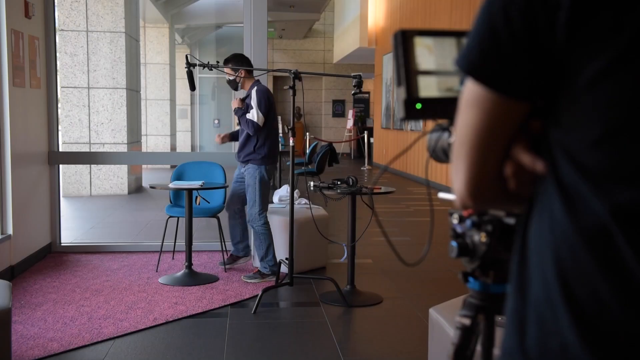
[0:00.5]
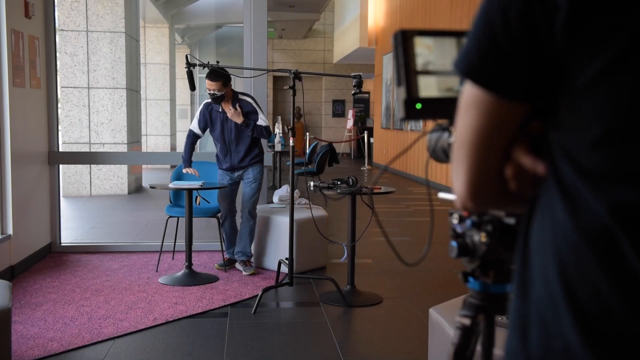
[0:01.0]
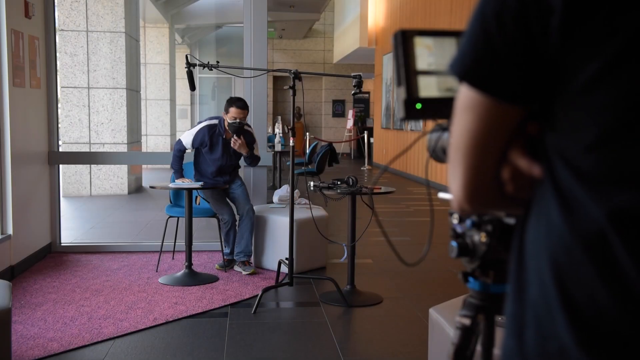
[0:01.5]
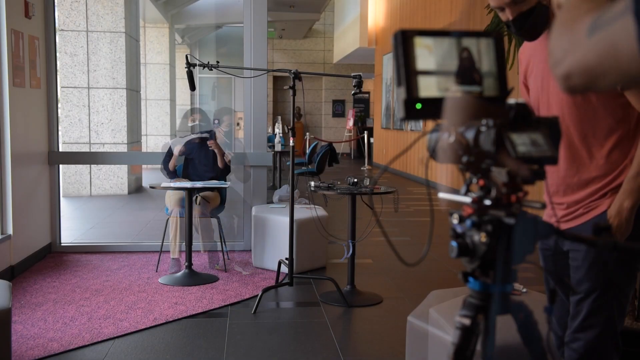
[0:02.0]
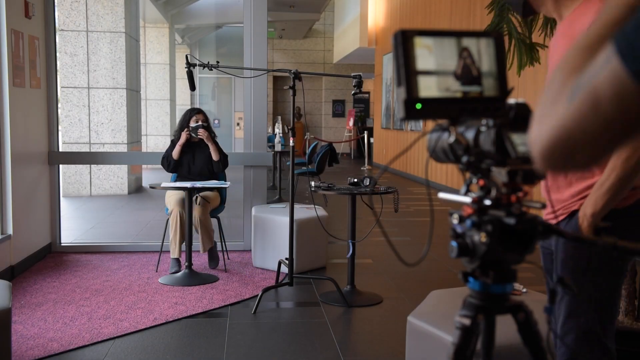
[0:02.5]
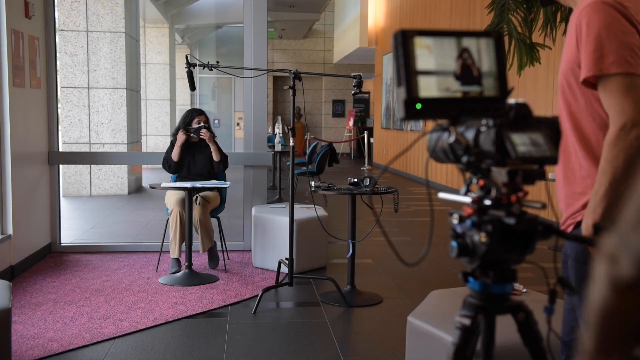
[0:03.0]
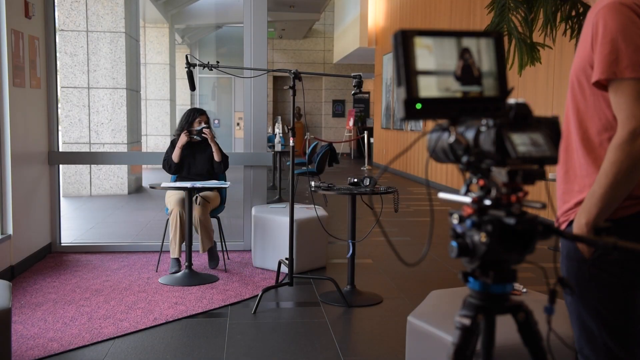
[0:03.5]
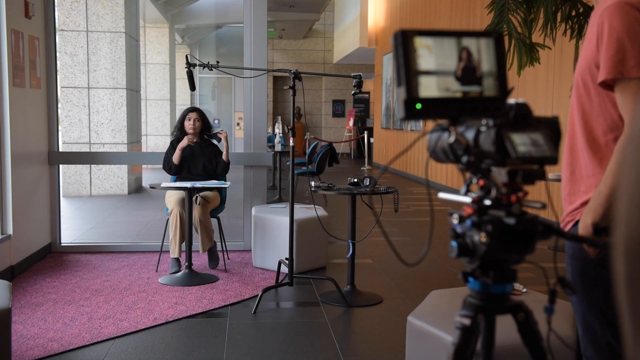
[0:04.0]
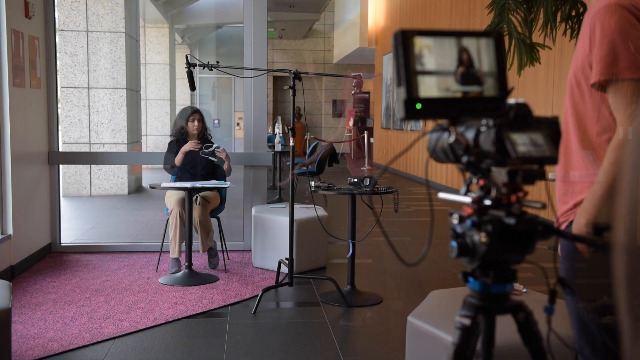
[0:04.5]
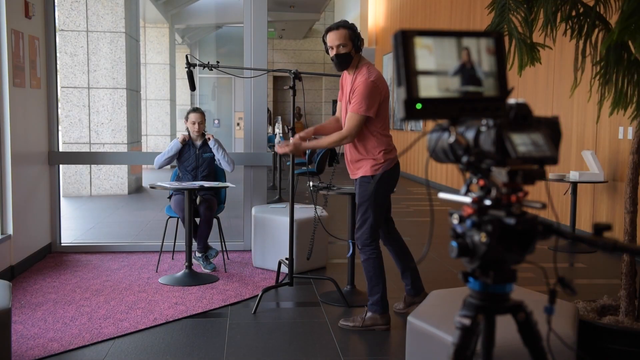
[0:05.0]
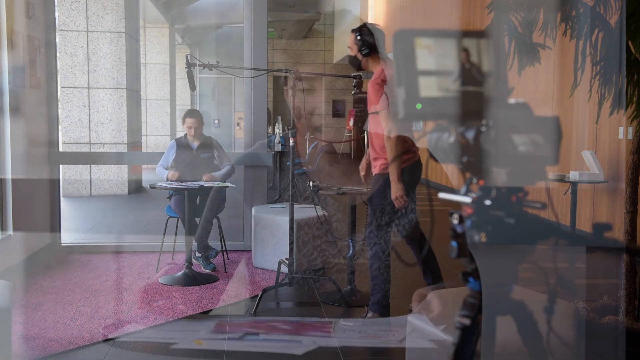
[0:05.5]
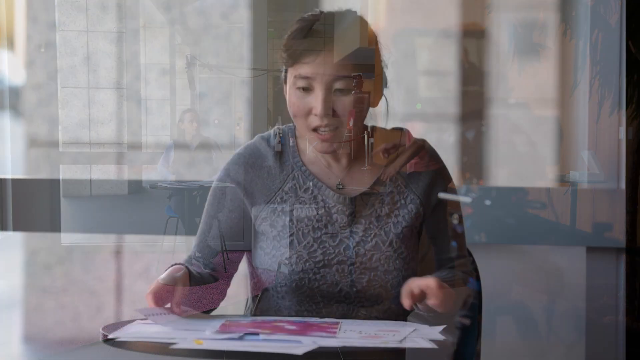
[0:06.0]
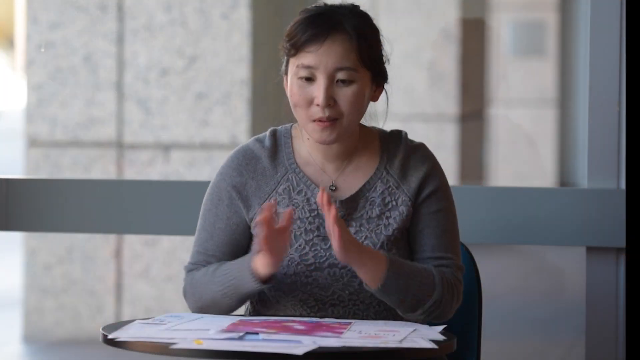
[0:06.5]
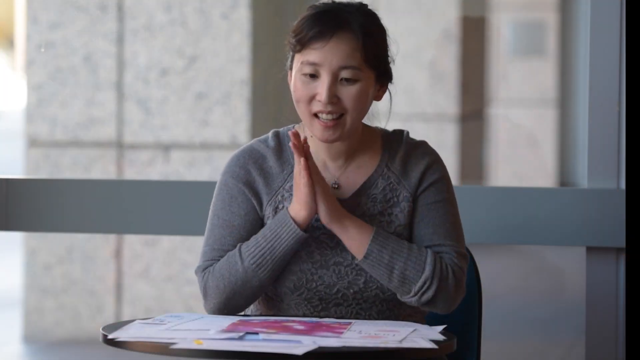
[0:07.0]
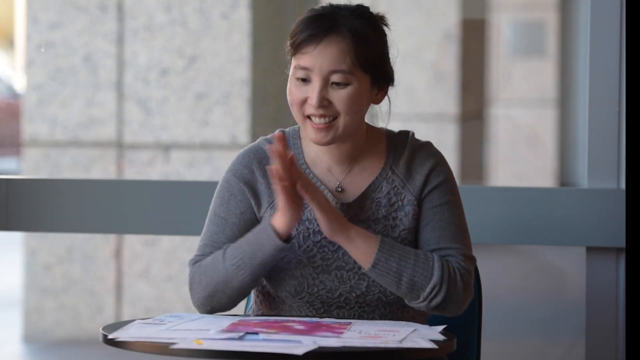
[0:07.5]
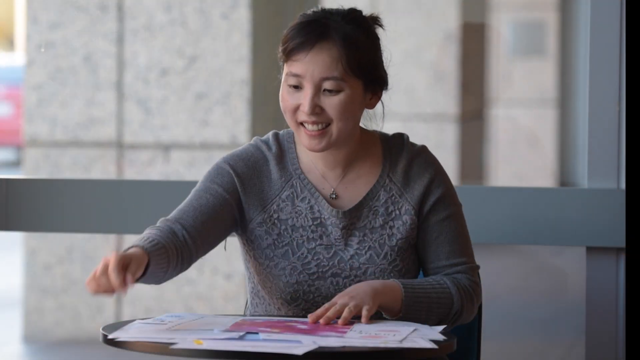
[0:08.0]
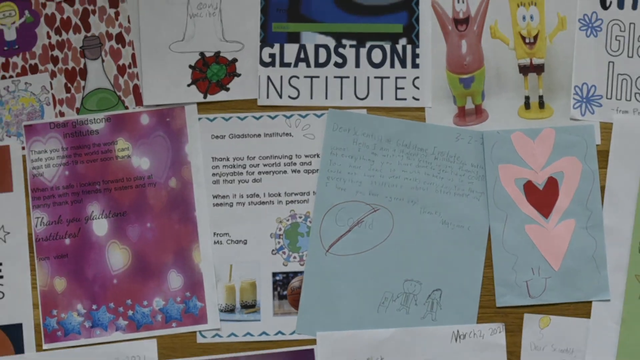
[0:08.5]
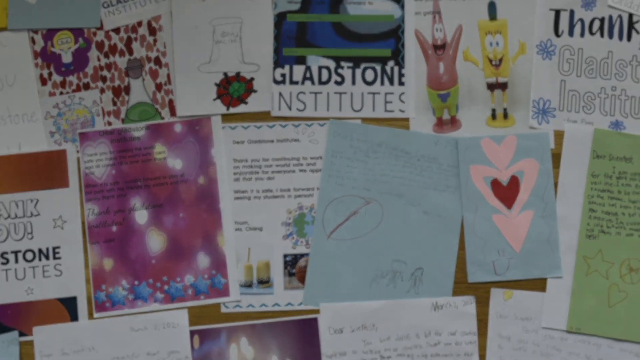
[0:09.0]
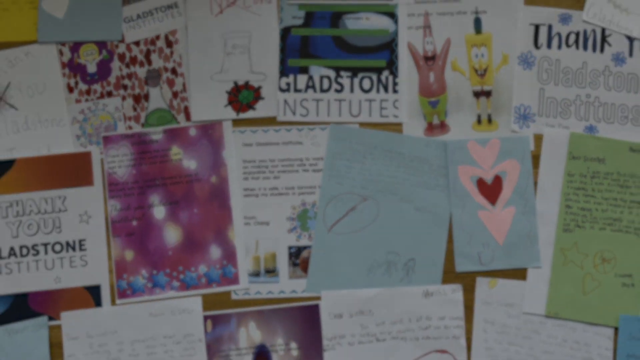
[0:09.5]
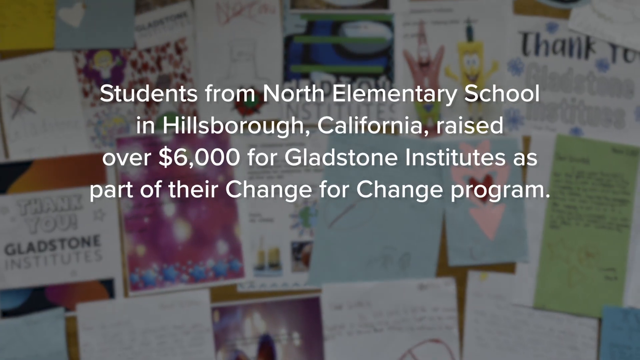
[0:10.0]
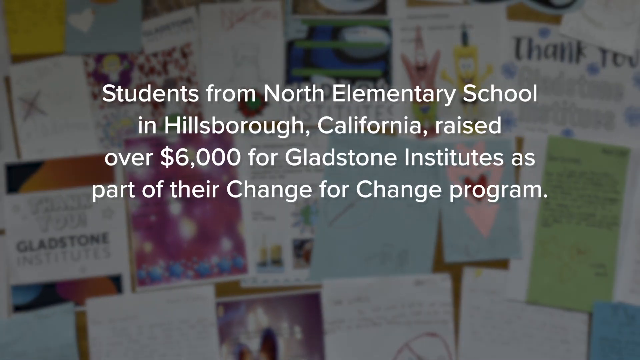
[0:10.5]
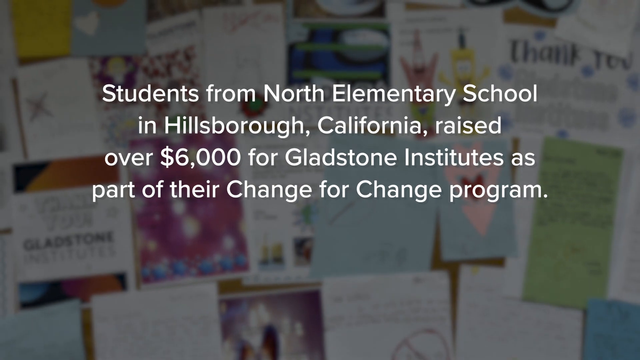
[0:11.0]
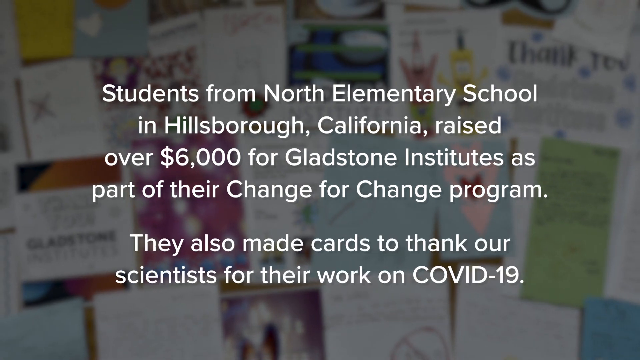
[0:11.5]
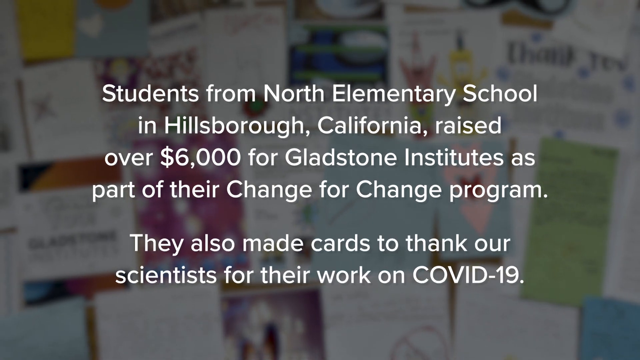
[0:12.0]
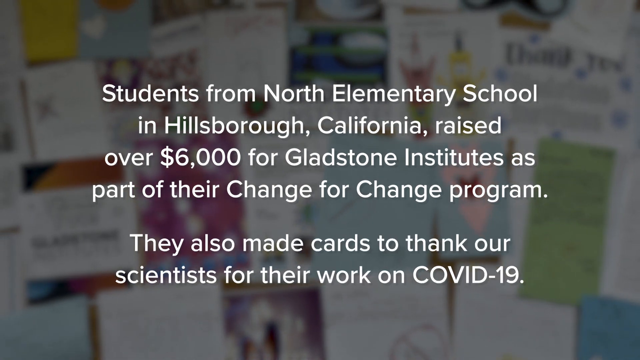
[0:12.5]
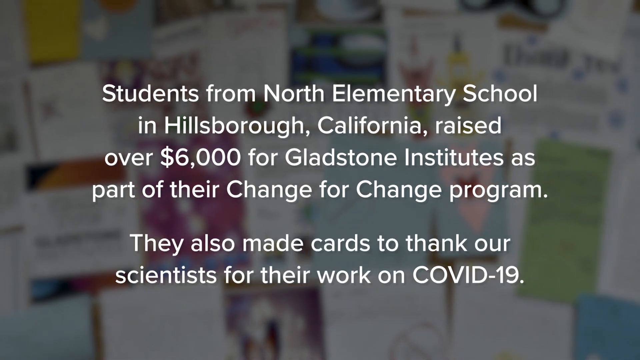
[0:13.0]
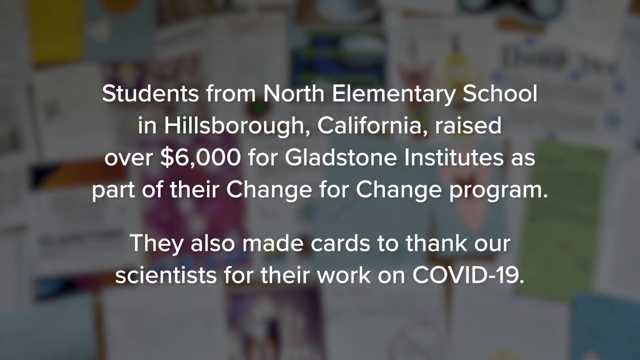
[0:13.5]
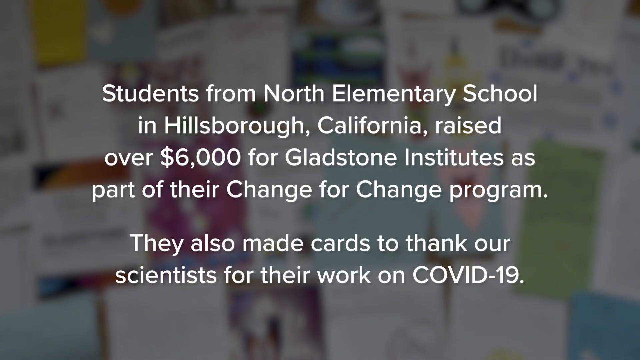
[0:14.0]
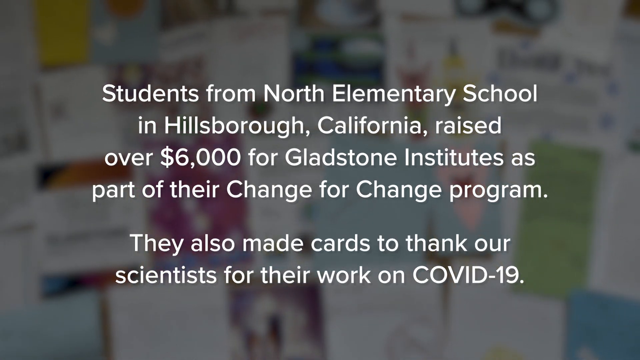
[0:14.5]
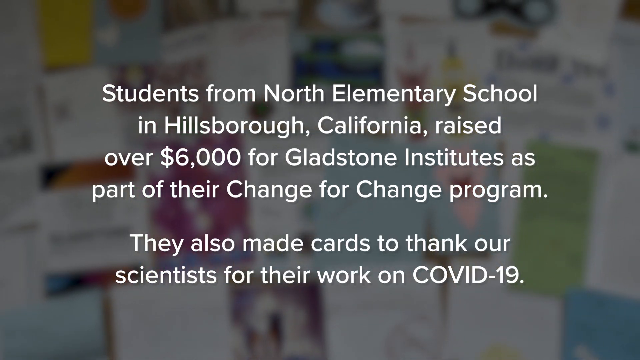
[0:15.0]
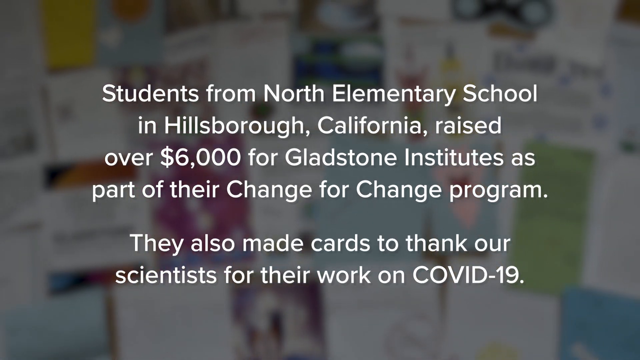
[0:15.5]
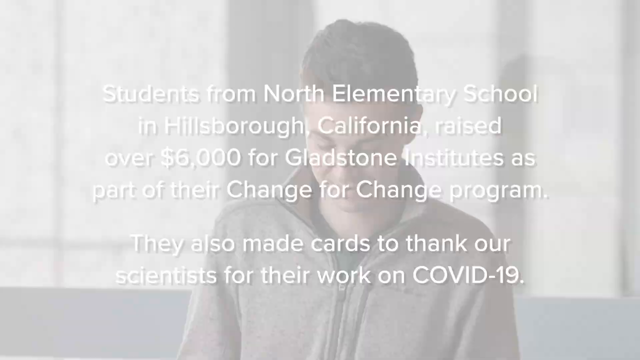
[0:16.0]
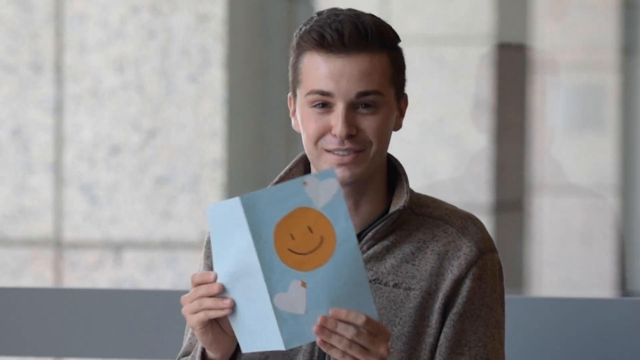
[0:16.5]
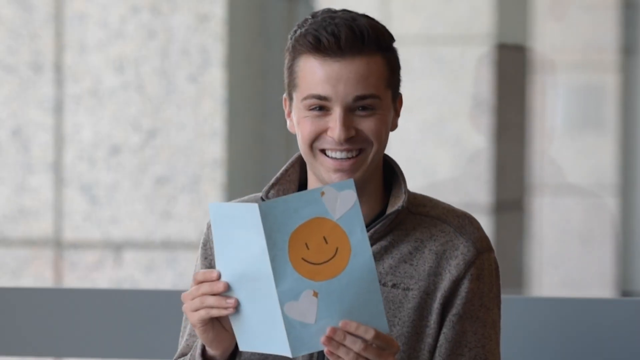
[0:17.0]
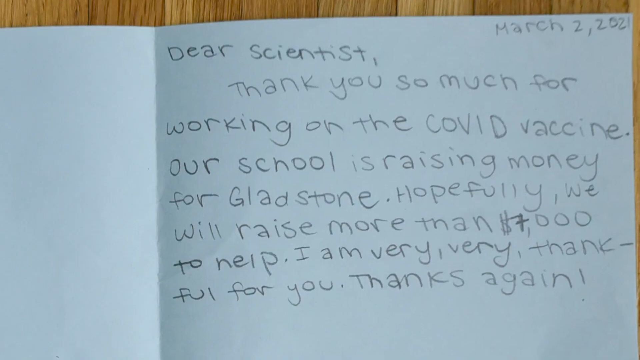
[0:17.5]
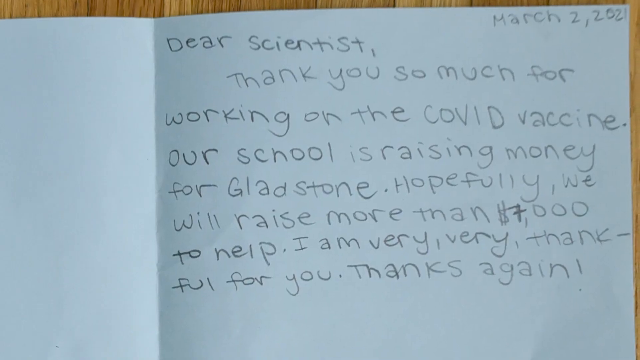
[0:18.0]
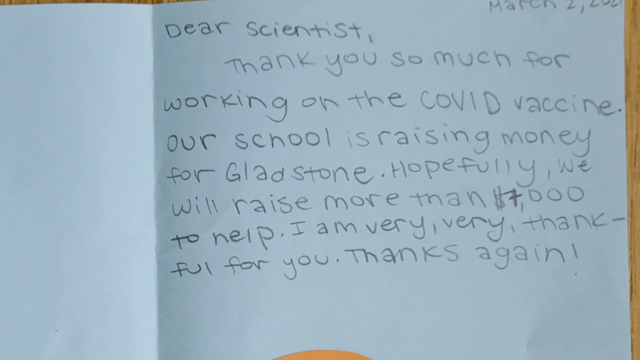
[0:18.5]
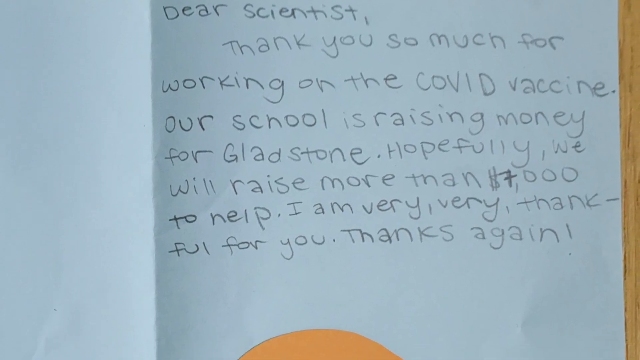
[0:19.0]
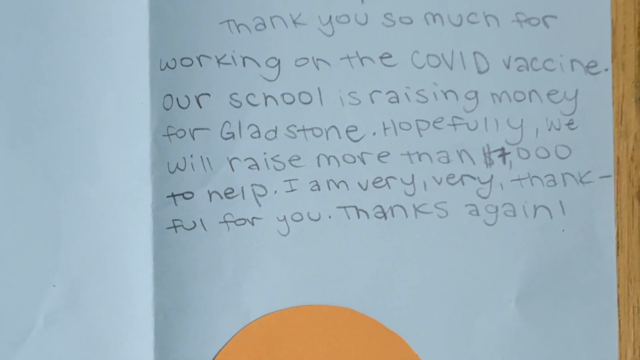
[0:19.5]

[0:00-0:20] Indoors, someone appears to be sitting down to be interviewed. The person starts off standing. A boom mic is set up, and the elbow of a cameraman is in the right corner of the frame, so whoever is filming is standing right behind them. The person about to sit down wears jeans and a long-sleeve shirt. They walk over to a blue chair, use their right arm to brace themselves on a small table, and sit. As they sit, their image morphs into a different person: a woman with a different body style is now sitting in the seat. She wears yellow pants, a dark top, and a black mask over her face. She starts with her hands placed on the mask, then removes it with her left hand, and her body form then morphs into an image of a different woman.